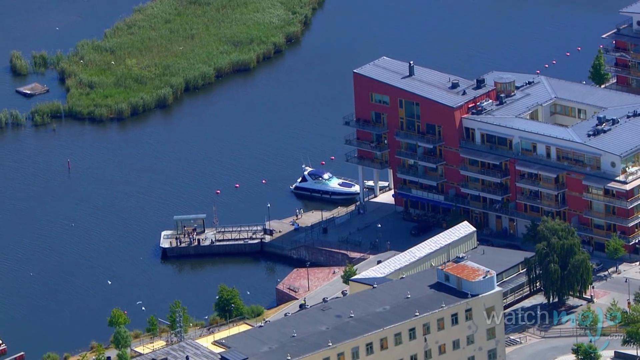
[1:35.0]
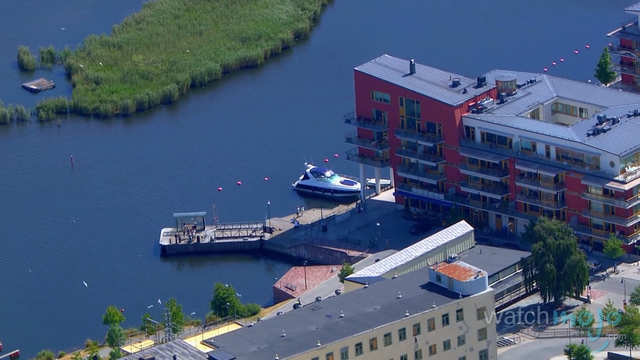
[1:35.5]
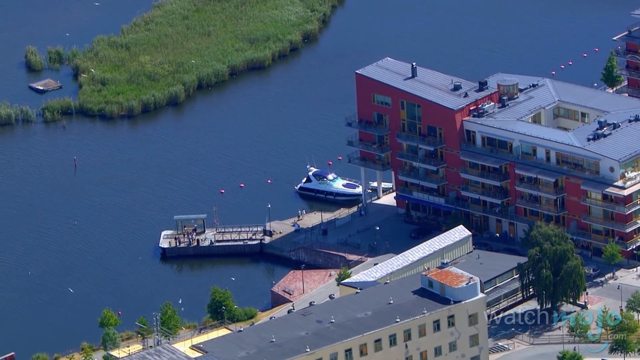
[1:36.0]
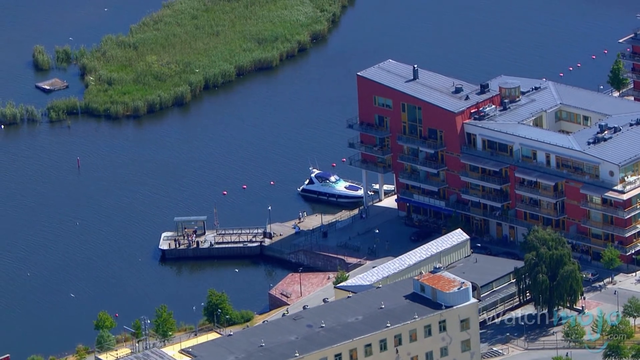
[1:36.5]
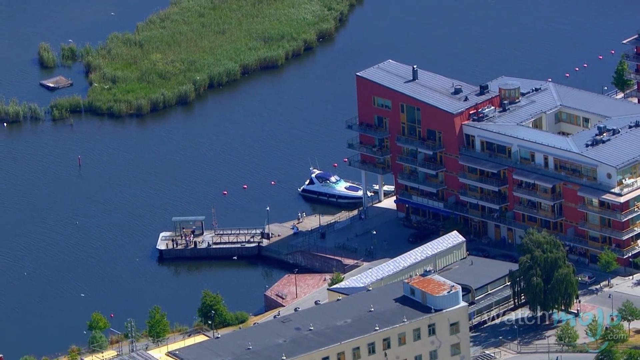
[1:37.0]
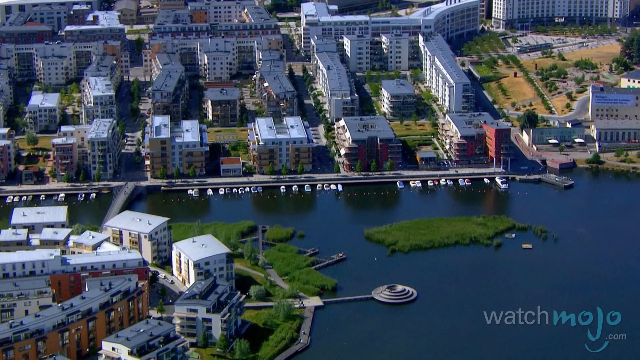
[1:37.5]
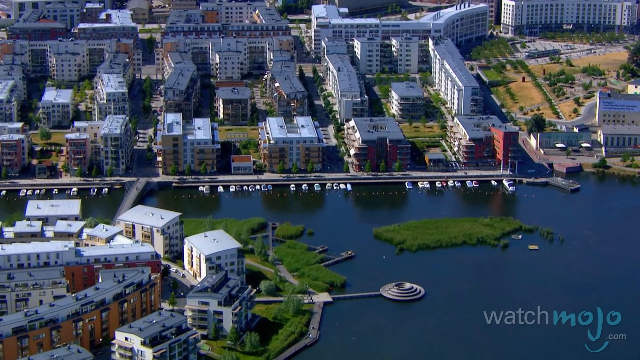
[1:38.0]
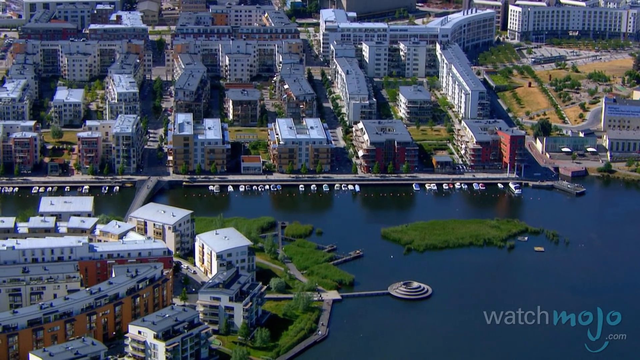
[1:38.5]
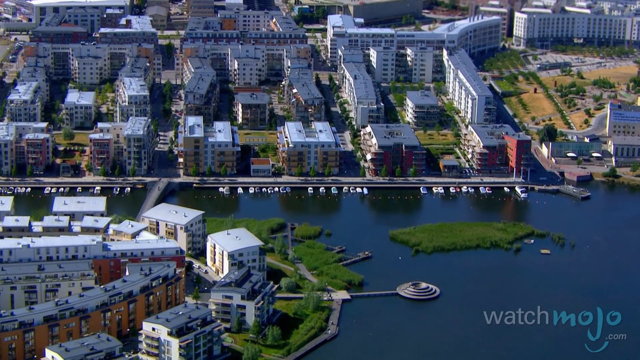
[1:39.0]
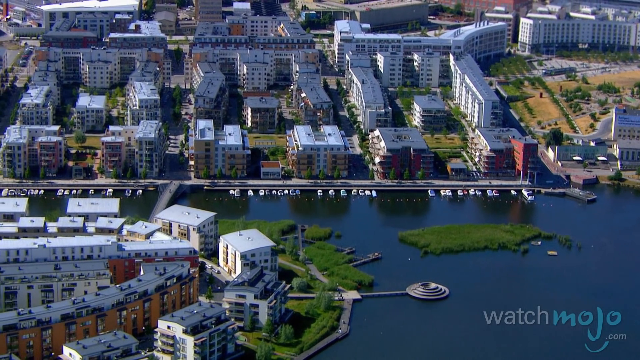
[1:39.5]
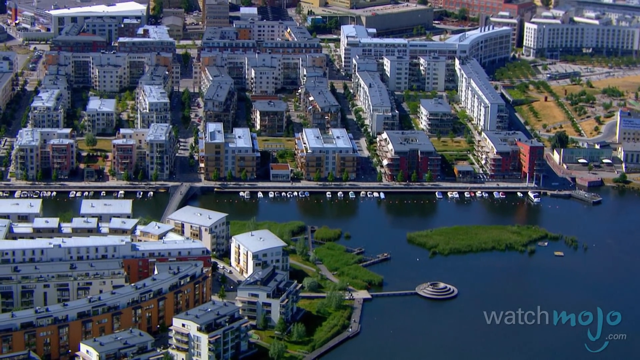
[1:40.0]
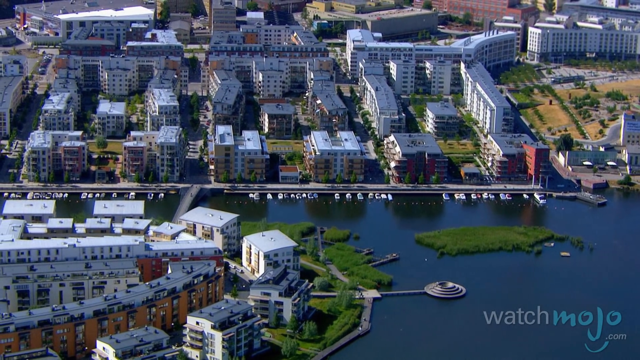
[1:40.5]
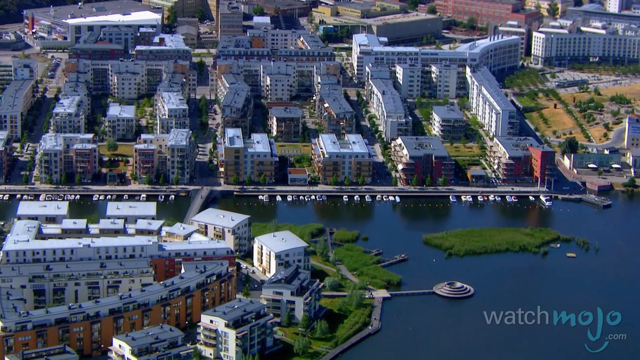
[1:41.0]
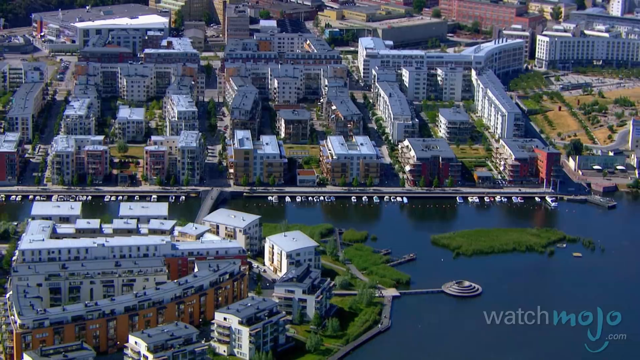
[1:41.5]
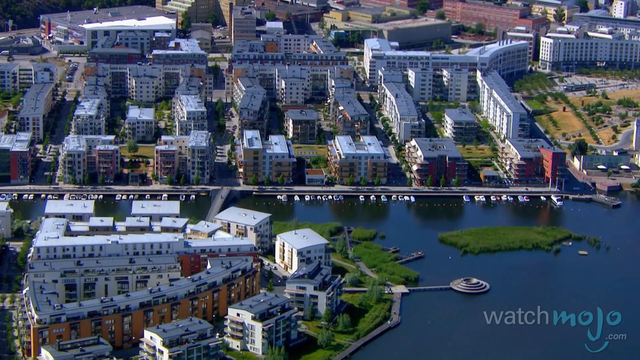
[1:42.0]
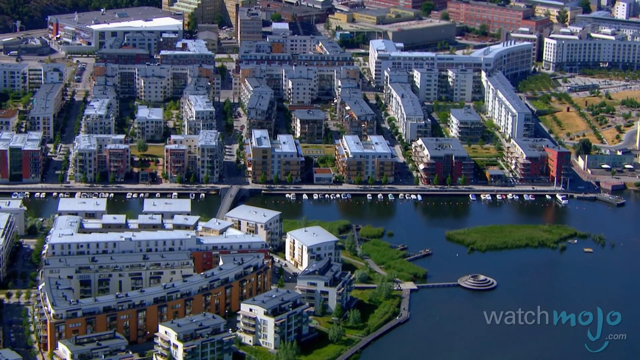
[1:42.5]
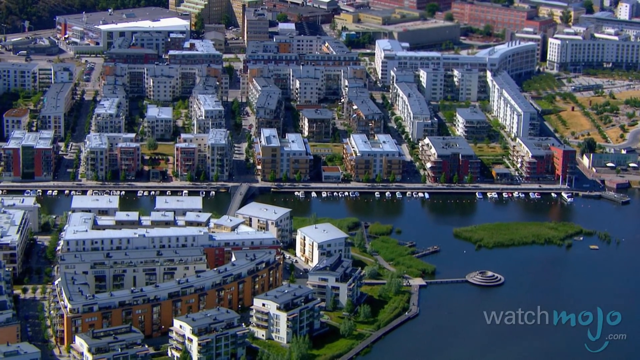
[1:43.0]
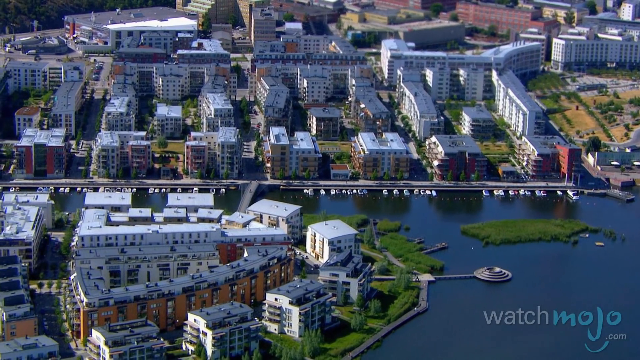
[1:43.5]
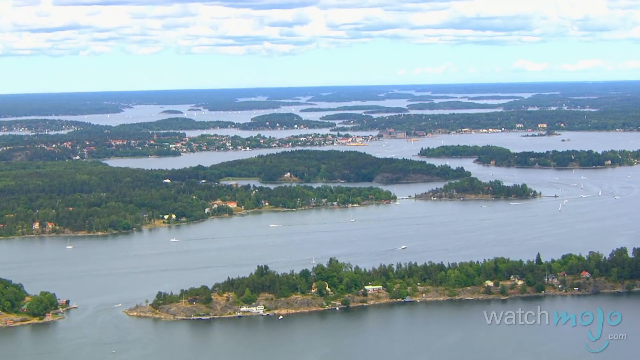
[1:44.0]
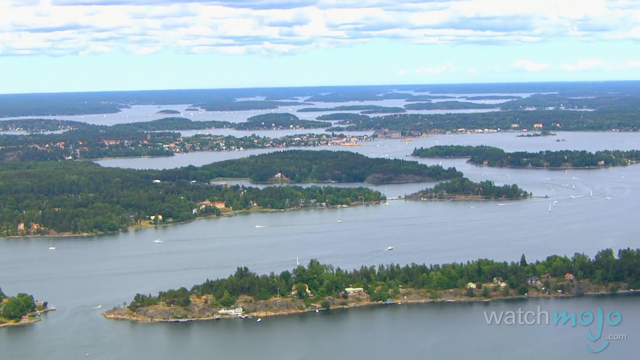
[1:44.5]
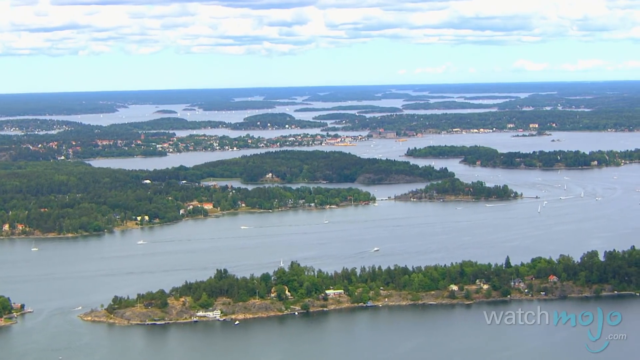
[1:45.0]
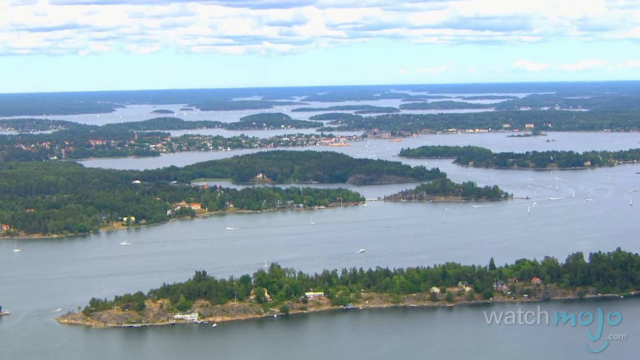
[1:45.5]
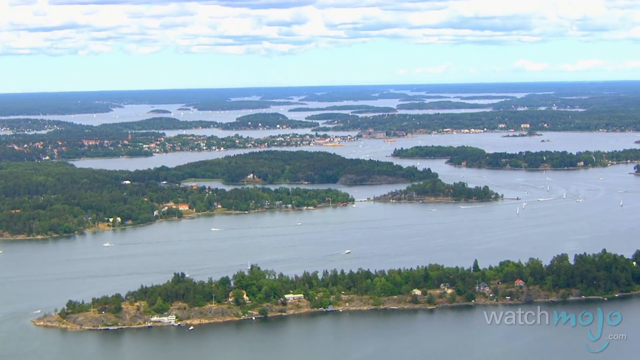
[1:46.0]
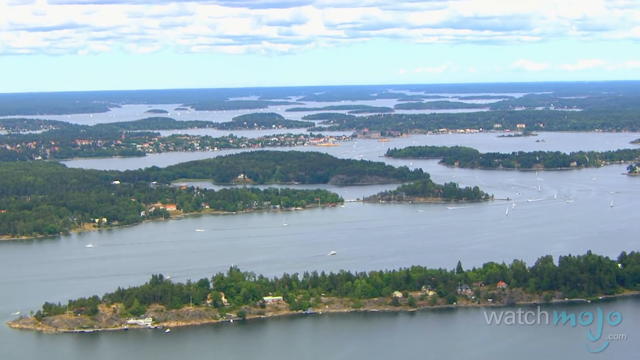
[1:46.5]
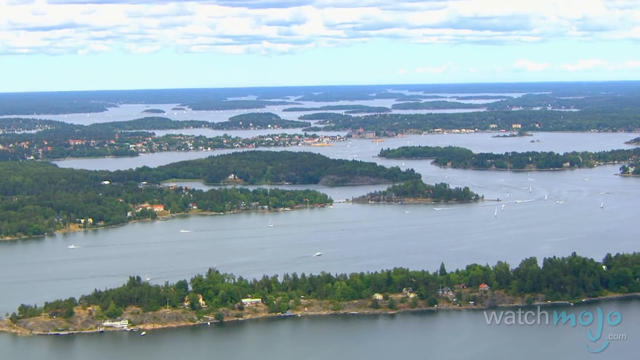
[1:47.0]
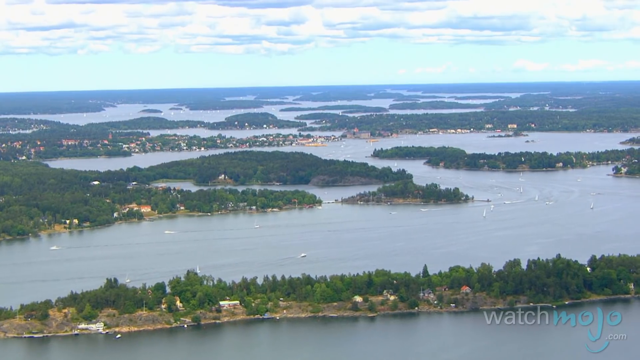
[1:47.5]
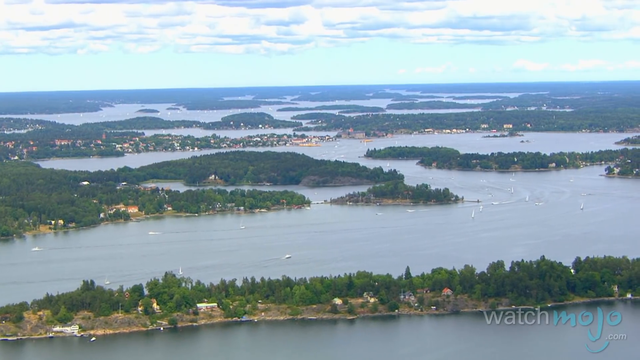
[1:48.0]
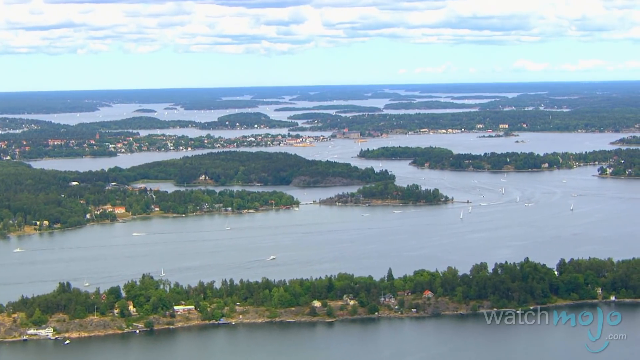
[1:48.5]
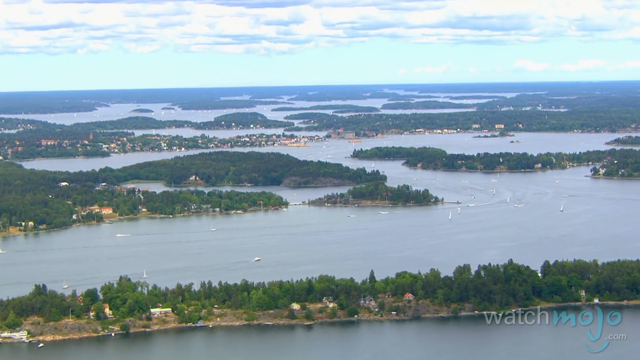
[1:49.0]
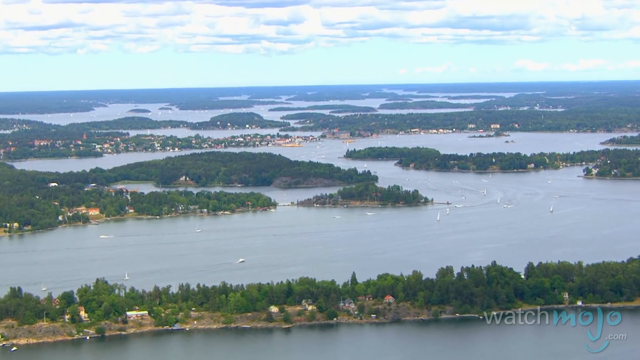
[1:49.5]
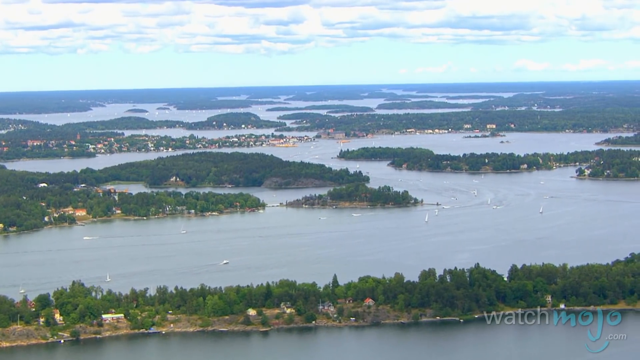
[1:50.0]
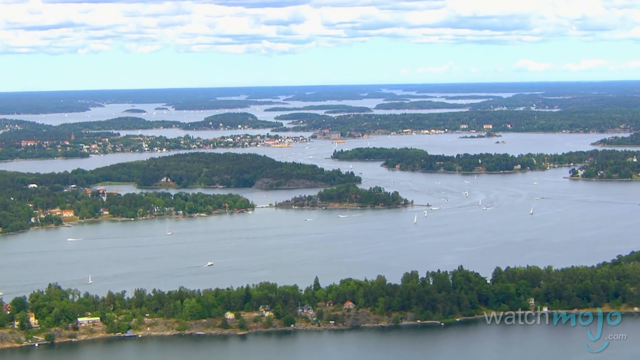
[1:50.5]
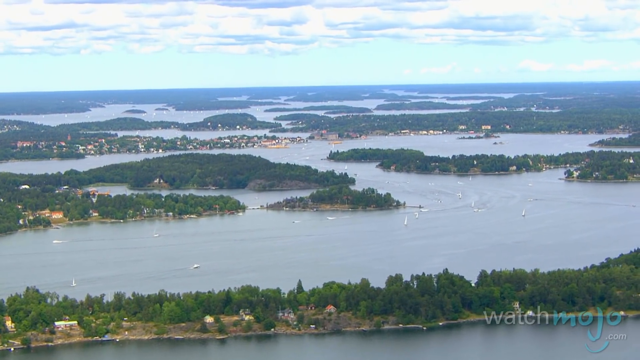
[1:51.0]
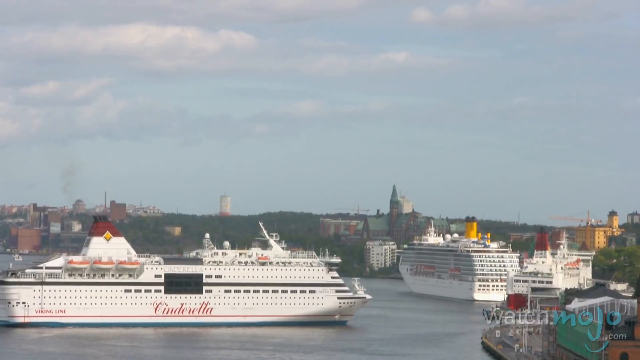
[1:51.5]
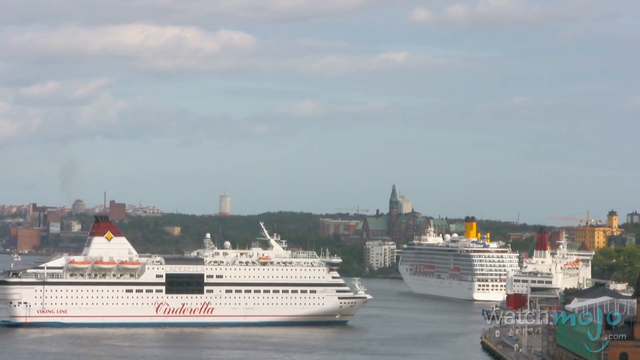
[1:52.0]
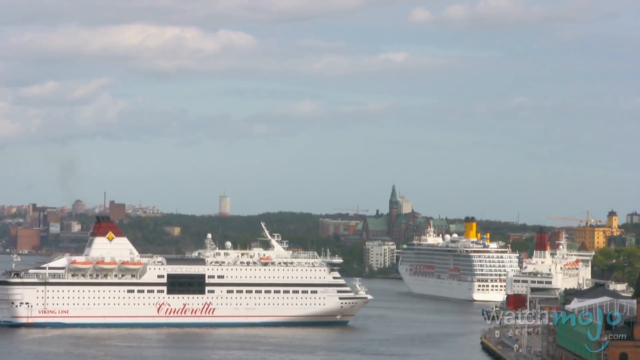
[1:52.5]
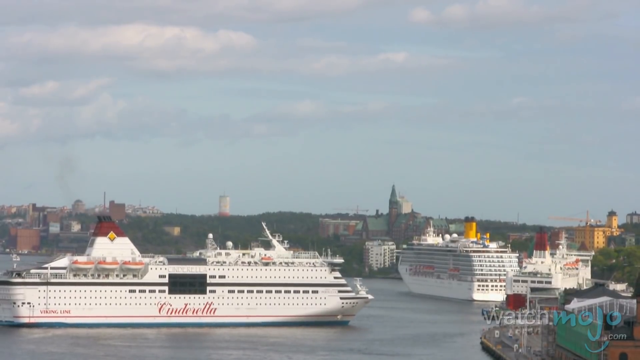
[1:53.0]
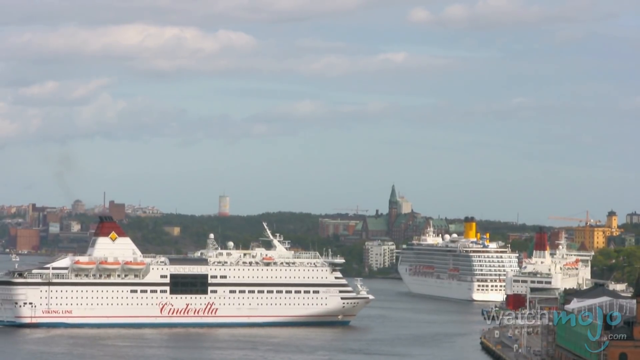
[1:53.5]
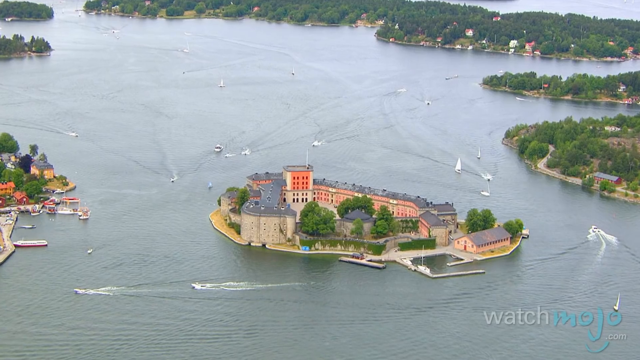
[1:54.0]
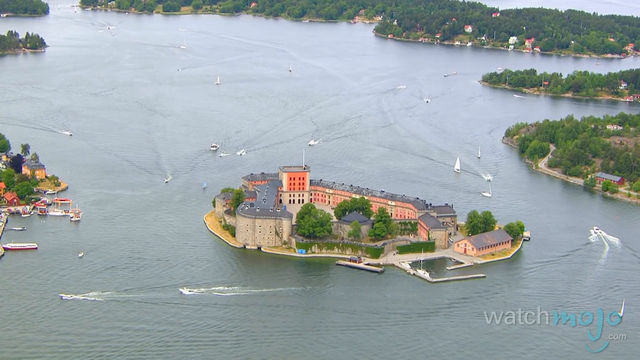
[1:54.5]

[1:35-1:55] The side of what looks like condos built right up to the edge of the water is shown, with access to walk down and get into a boat. There appear to be balconies around the units, and there are maybe about six to ten of them in a row on the marina. A snippet then shows what looks like cruise ships coming into the area. One ship is called the Cinderella ship; it is white and looks like it has maybe 10 floors. It is coming in to dock, and there appear to be two other ships already there, which would make it the third. There is also an area with a lot of inlets for boats to ride around, not quite marshland, with water surrounding the land.